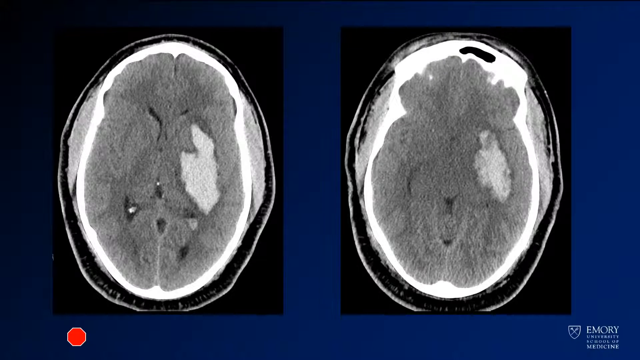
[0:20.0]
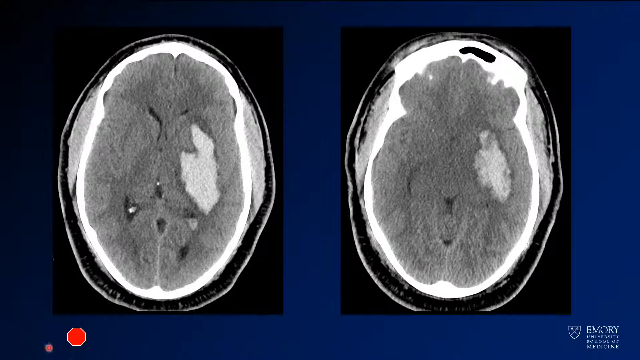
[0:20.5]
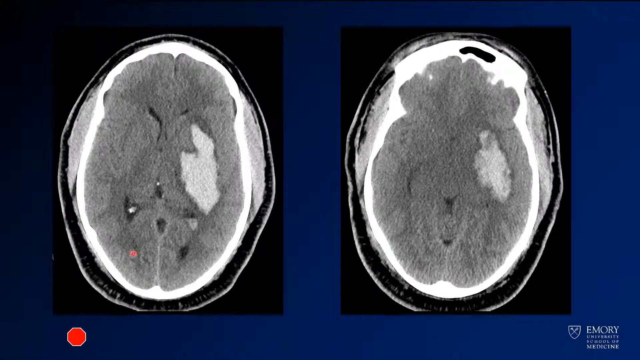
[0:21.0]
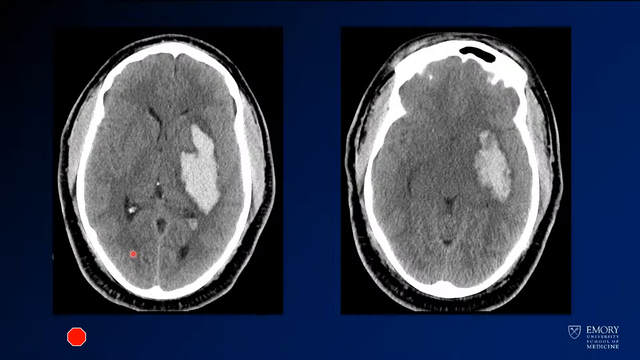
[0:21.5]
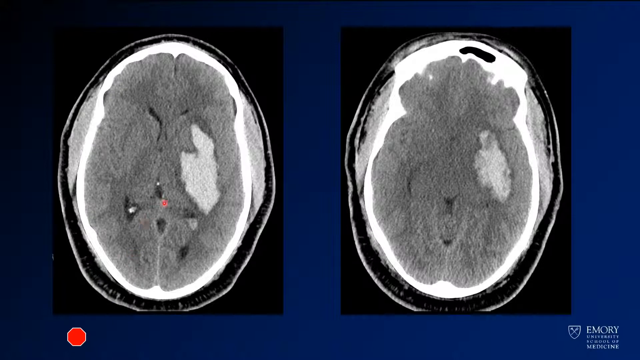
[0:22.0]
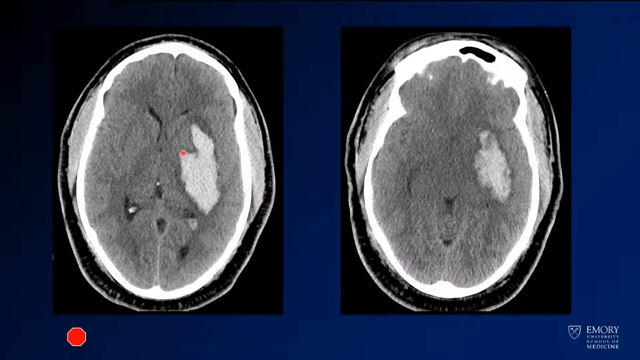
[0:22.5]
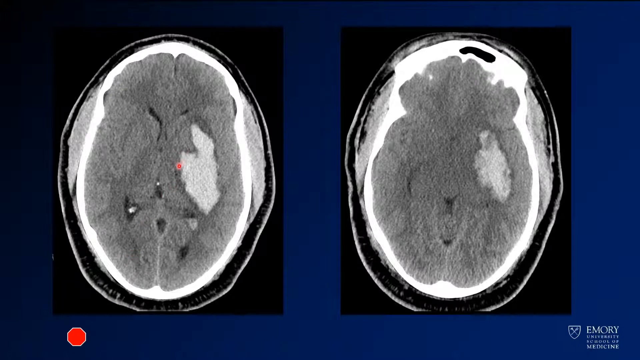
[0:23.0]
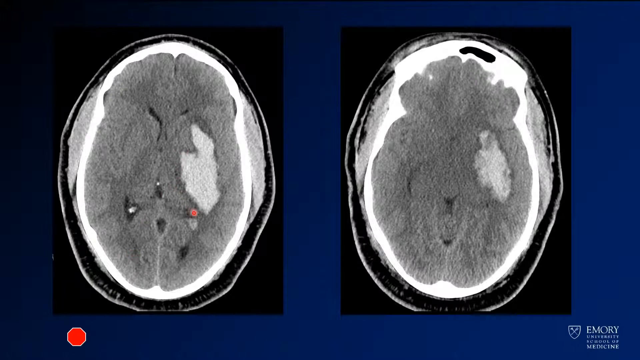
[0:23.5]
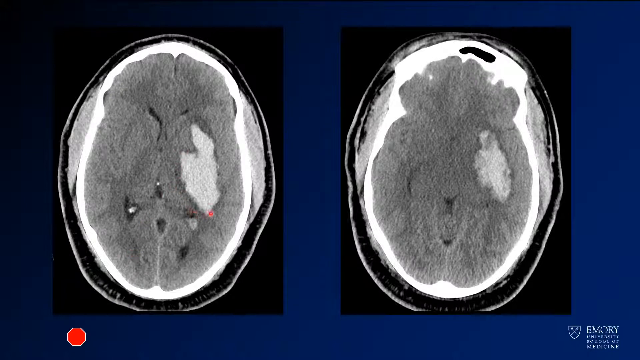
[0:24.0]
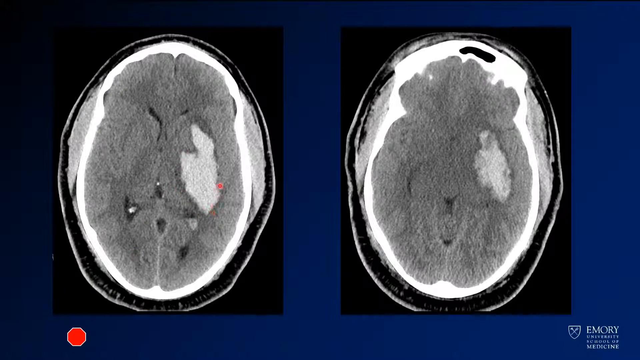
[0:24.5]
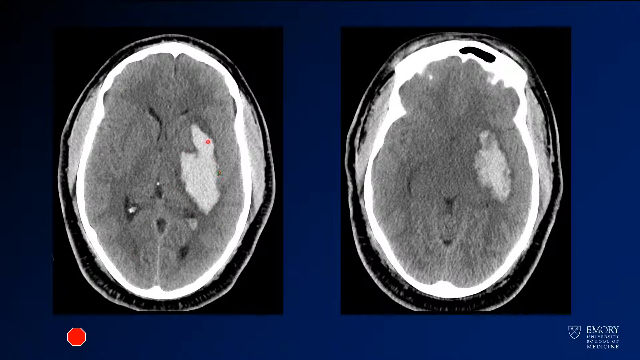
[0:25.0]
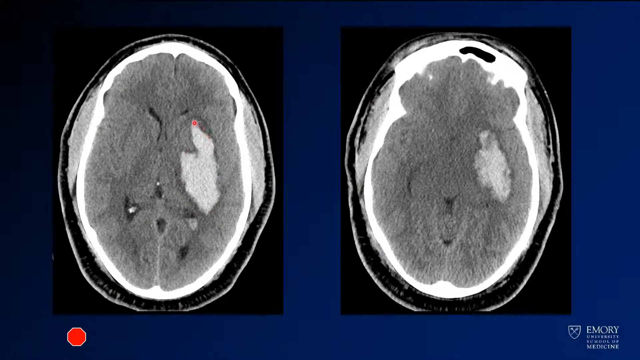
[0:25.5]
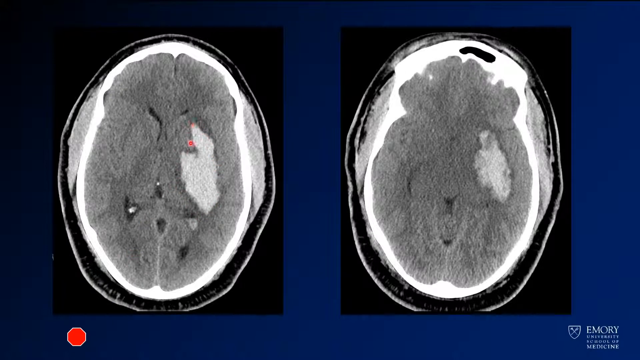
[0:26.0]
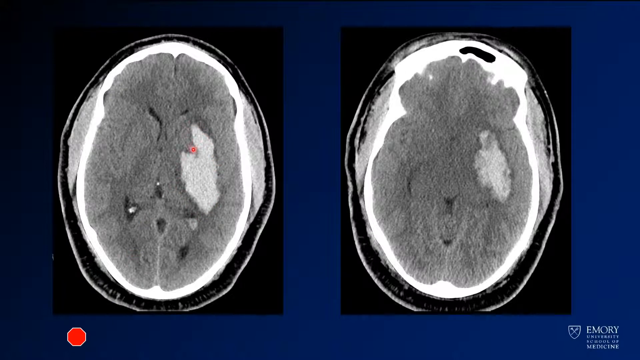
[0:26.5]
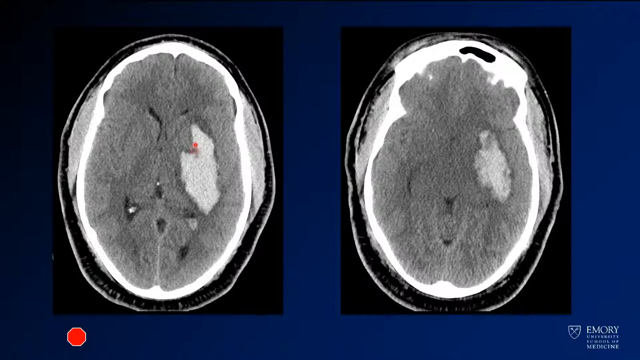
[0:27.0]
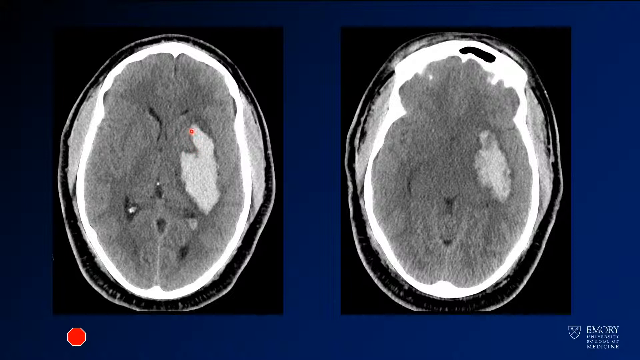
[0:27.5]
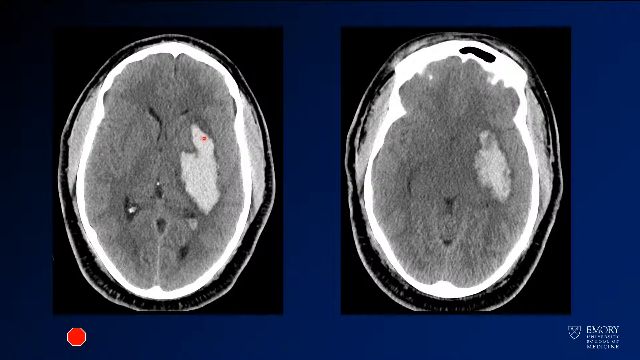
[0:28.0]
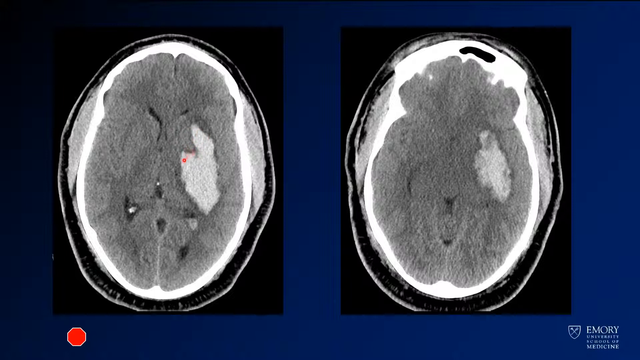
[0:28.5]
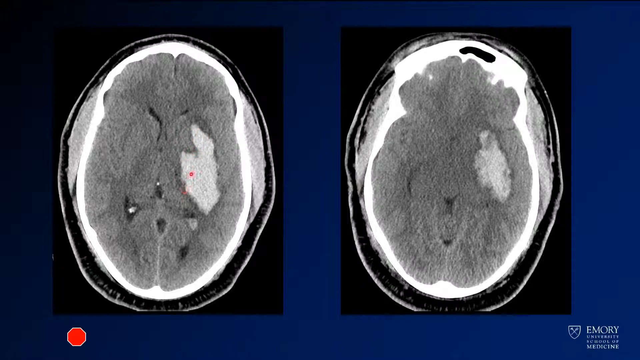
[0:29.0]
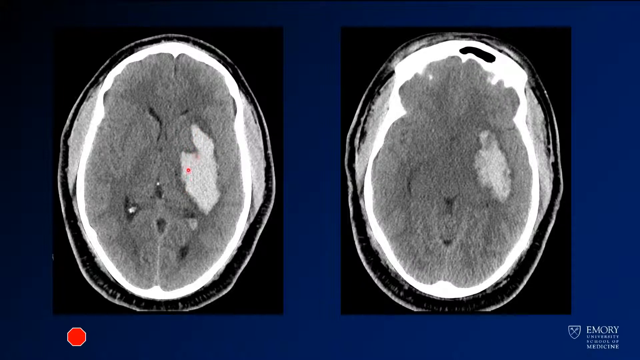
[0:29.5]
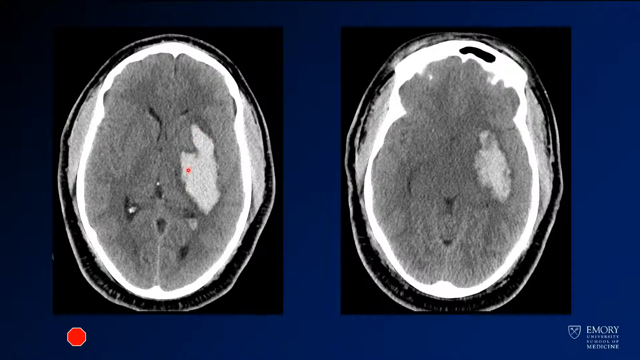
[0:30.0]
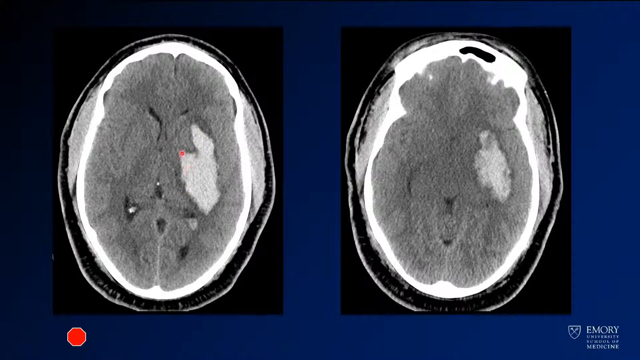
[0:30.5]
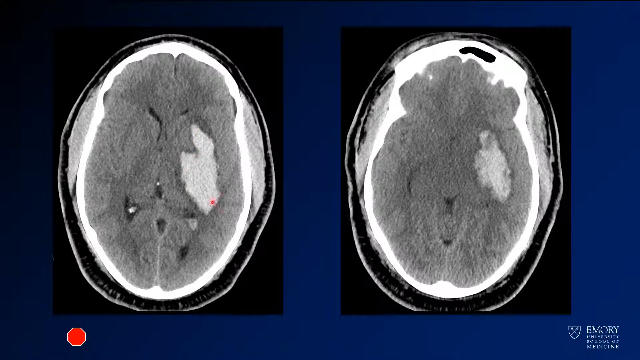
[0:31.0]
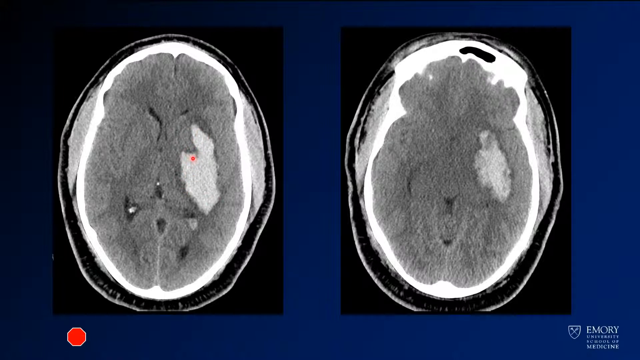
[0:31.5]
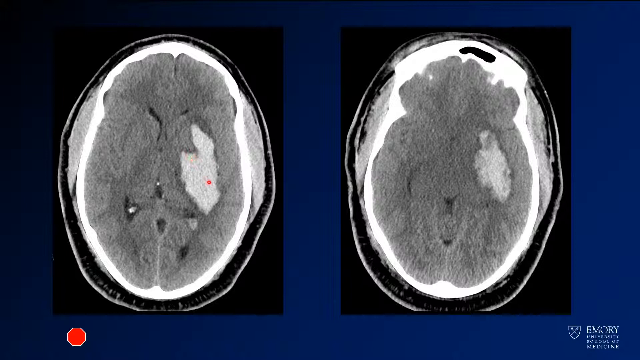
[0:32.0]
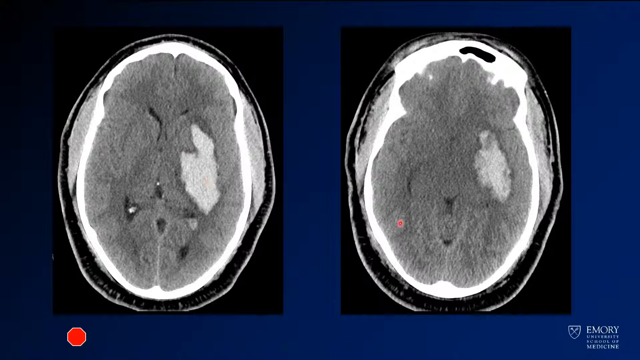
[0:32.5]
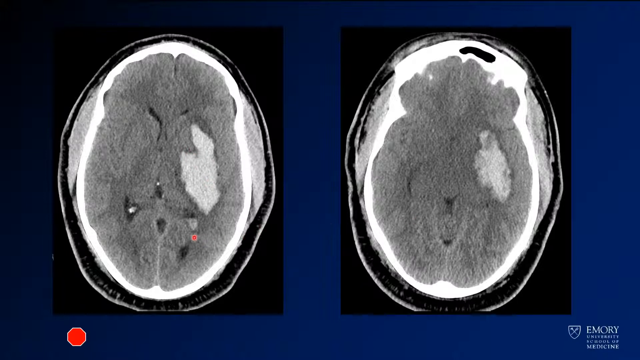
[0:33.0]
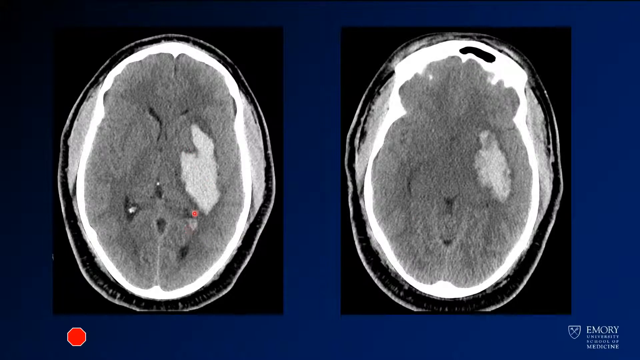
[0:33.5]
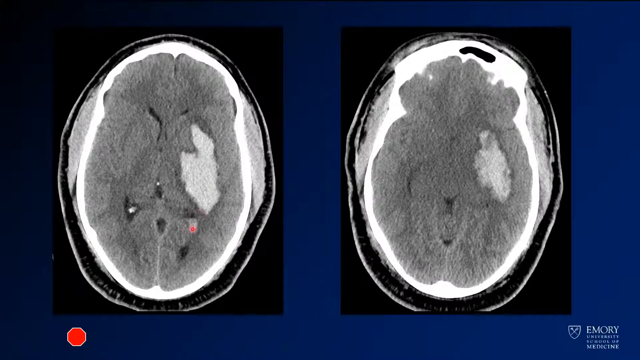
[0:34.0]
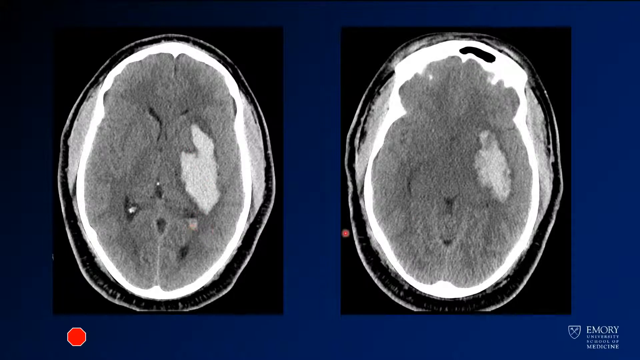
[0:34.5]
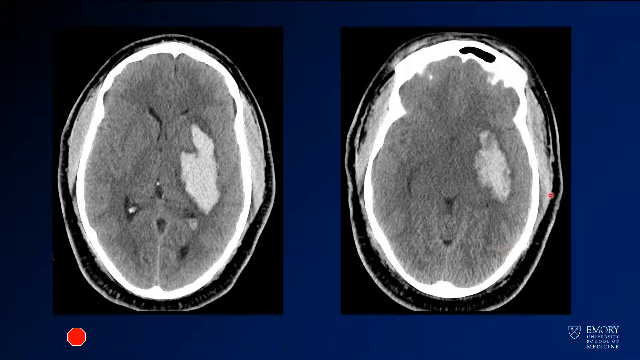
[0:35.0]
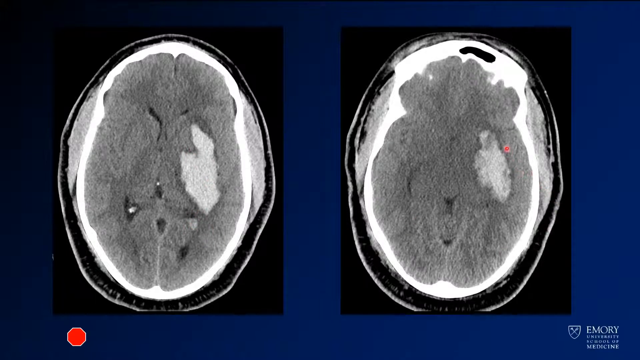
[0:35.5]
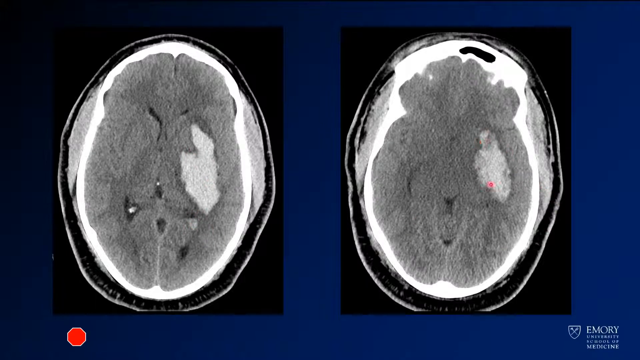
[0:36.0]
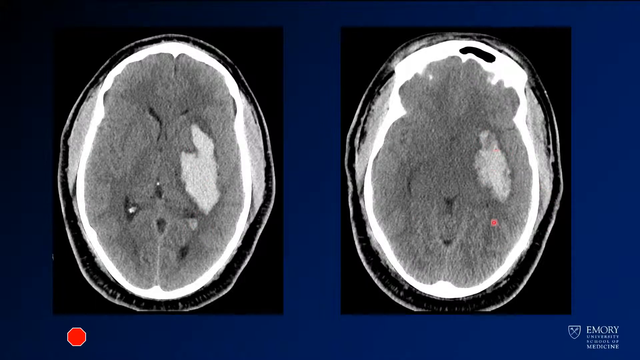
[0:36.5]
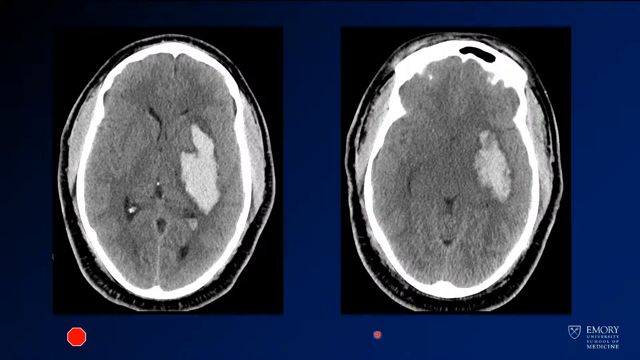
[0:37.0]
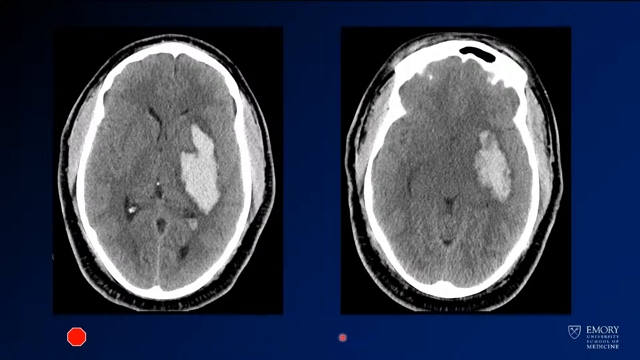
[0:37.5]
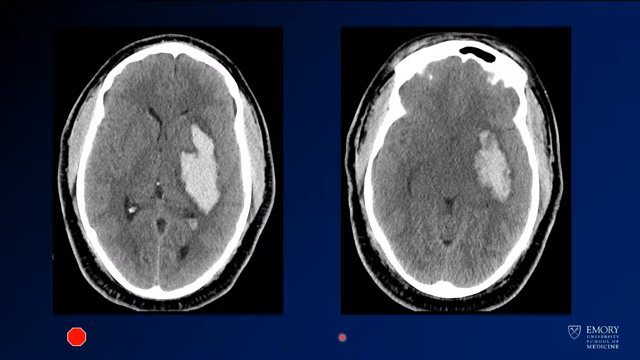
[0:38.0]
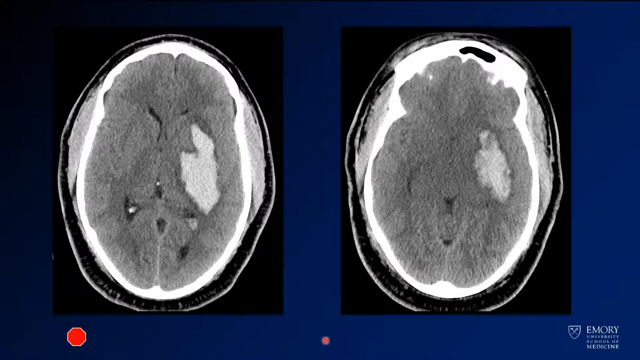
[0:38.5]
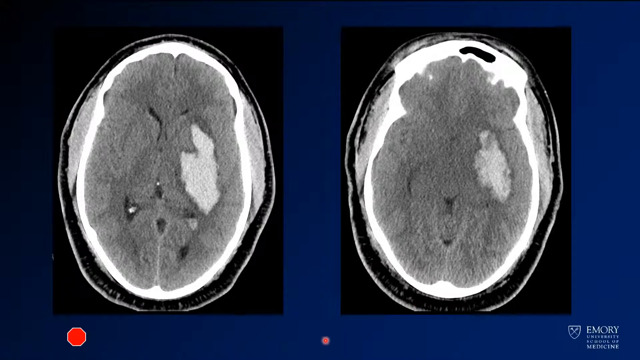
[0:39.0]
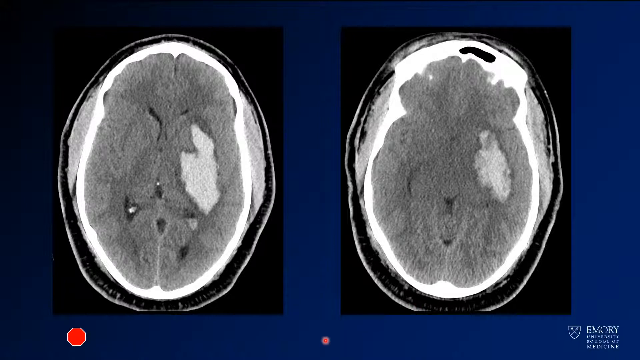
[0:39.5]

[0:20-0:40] The same two pictures remain on screen, now with a moving red dot. The dot highlights the hole, or differently colored area, which does look like missing material; it is larger on the left slice and smaller on the right. The two CT slices are side by side, the right one with a much smaller hole than the left. The red dot moves back and forth inside the hole in the left-hand scan a number of times, wiping across it.